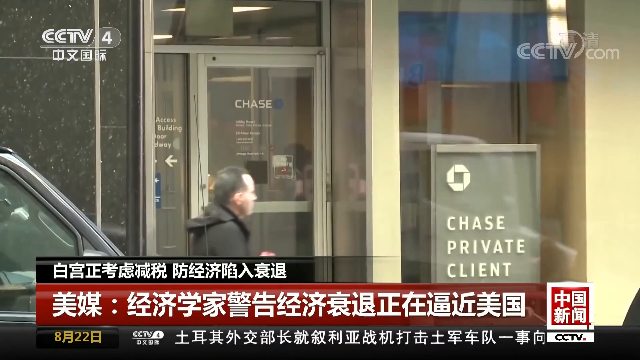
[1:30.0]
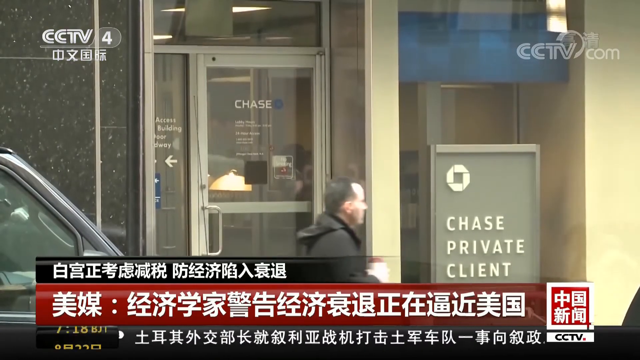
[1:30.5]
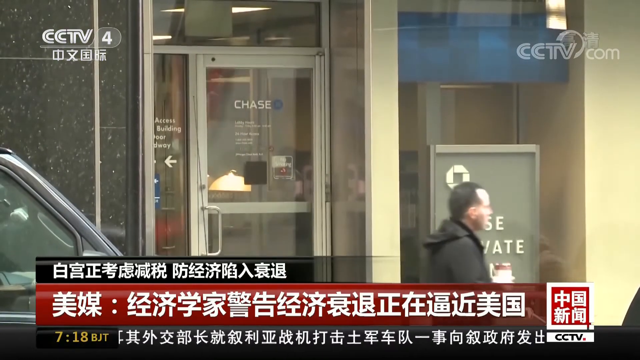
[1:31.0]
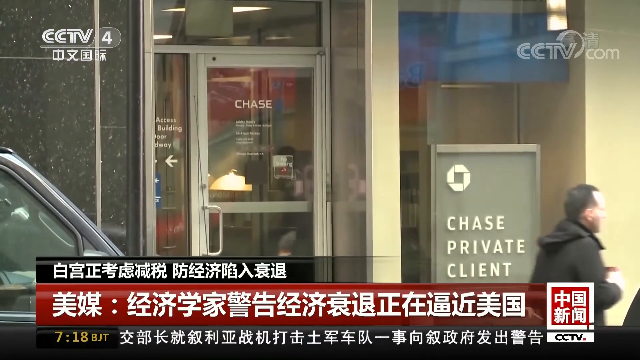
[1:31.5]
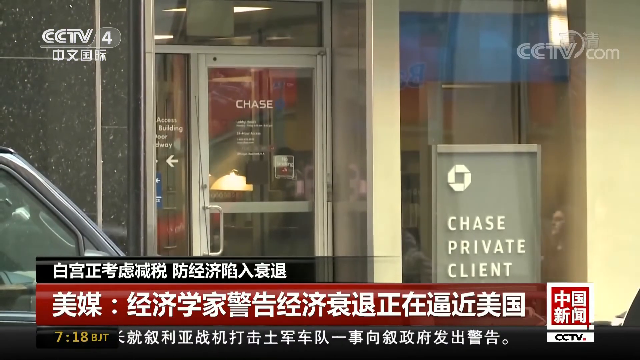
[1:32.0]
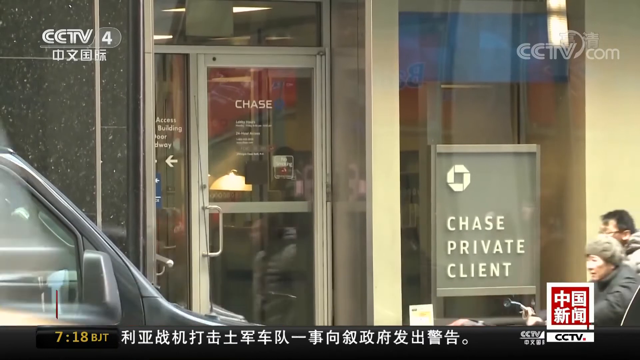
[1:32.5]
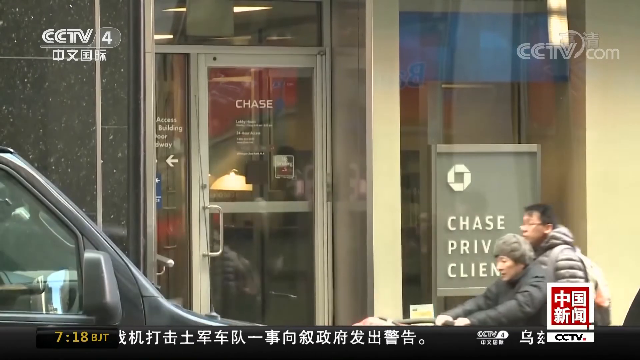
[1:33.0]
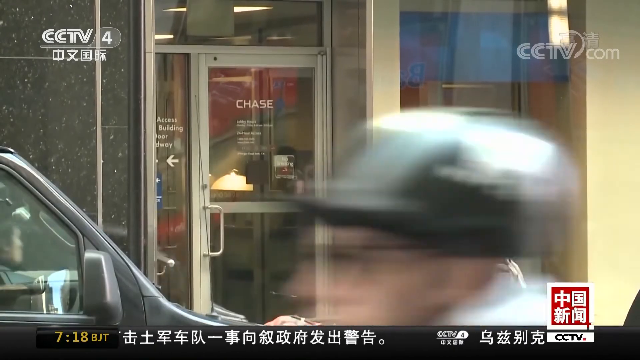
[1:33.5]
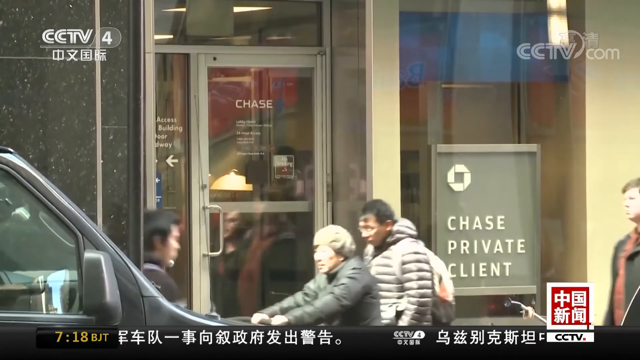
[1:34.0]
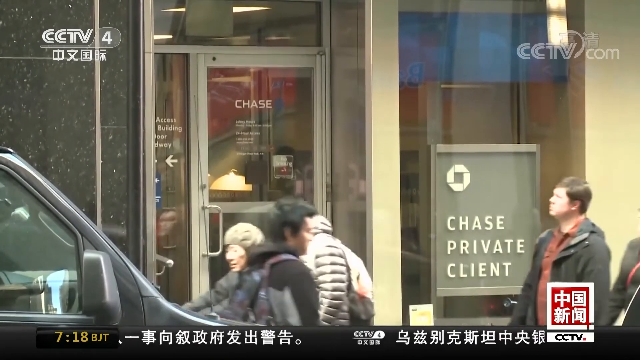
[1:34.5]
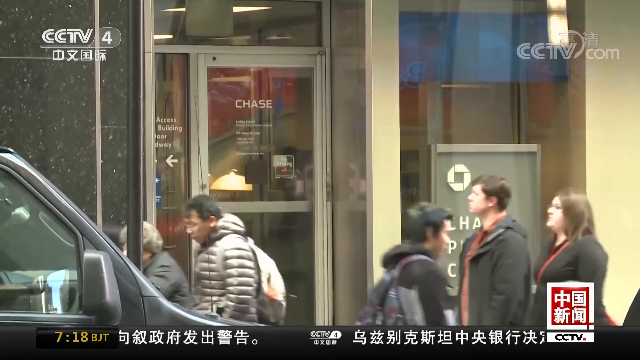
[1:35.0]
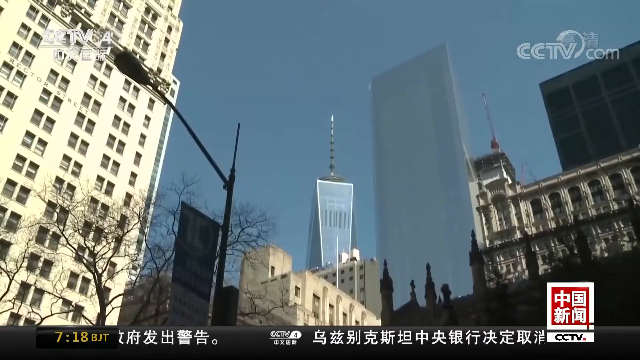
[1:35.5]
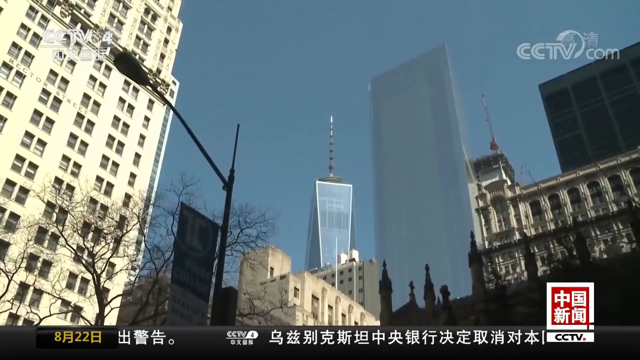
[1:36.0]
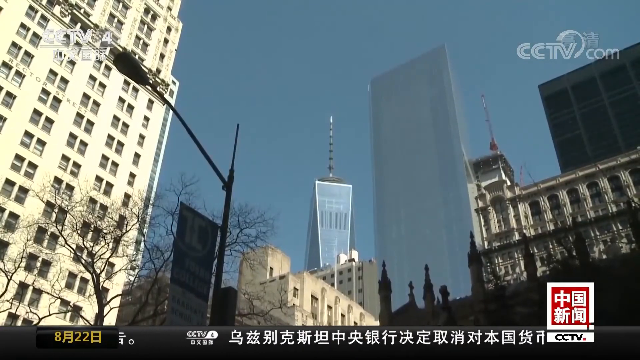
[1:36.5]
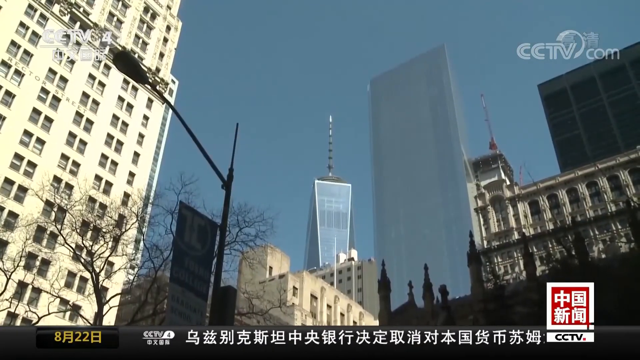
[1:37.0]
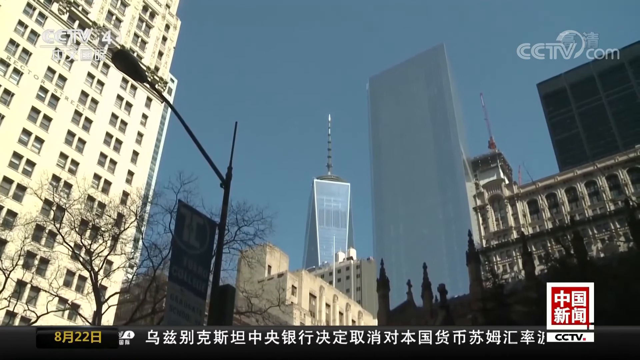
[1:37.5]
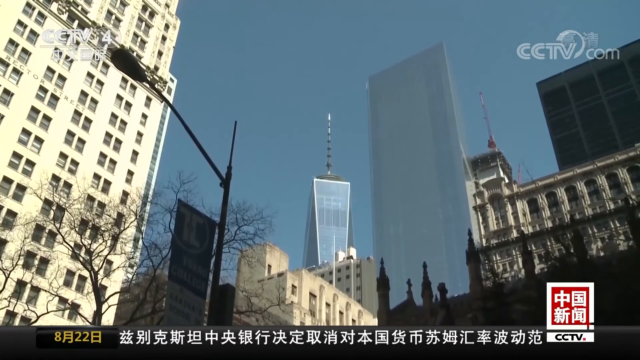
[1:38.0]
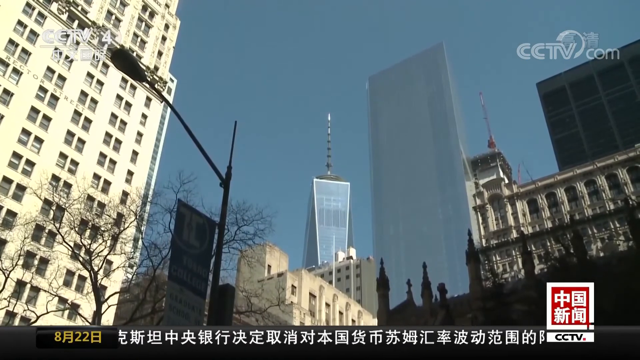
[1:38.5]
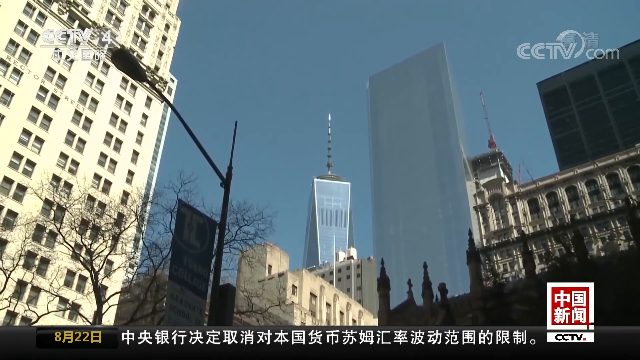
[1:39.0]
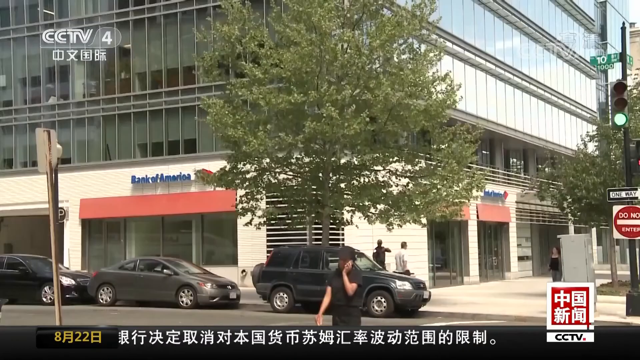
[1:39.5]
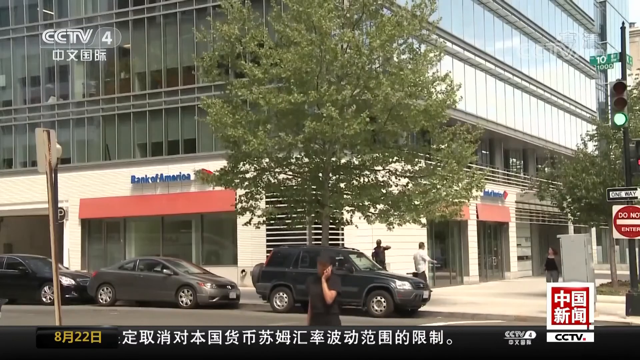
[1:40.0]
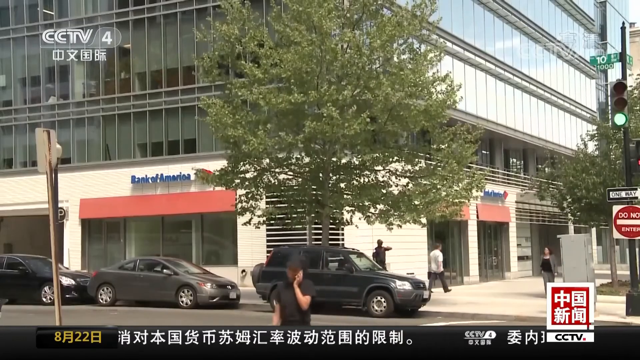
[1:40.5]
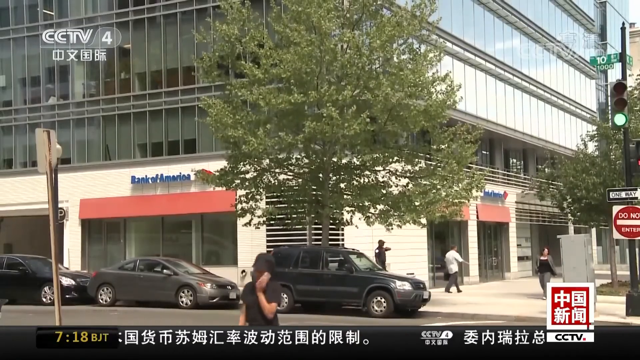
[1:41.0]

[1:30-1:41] Close-up views of storefronts follow. First the outside of the Chase building is recorded; it looks to be downtown and is not a very big building. Then a bigger, really tall building is shown, possibly the Chase building or not. There is one tall building on the far right and one to the left where the camera is facing. The sky is not clear blue but kind of misty blue. There are also a couple of other taller buildings with points at the top. Finally, the camera shows Bank of America.